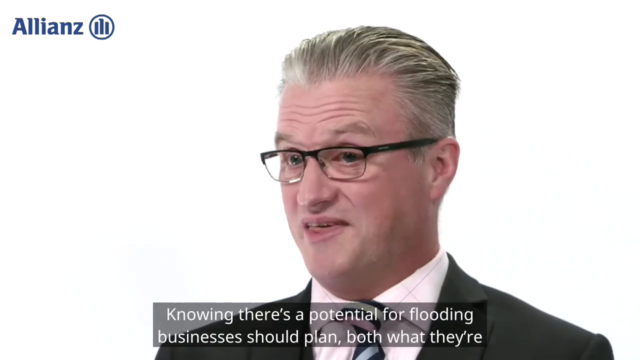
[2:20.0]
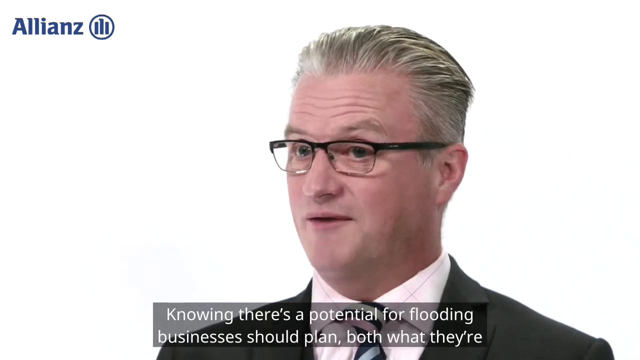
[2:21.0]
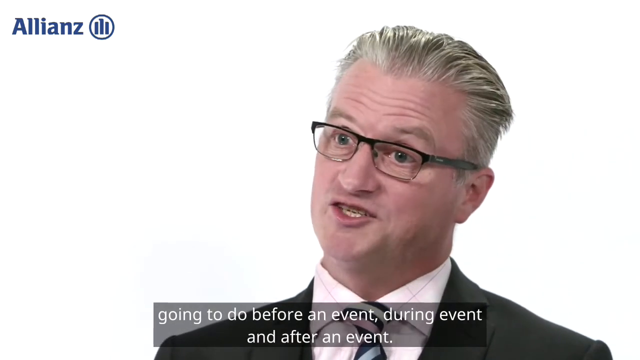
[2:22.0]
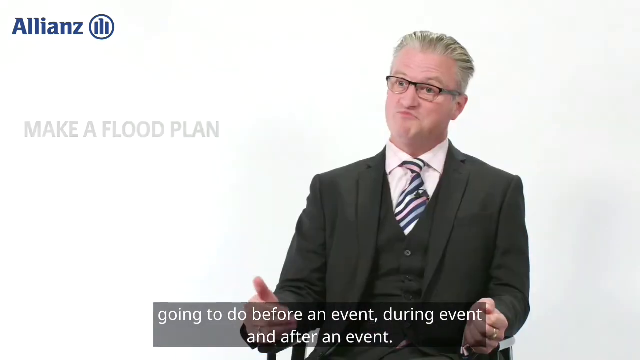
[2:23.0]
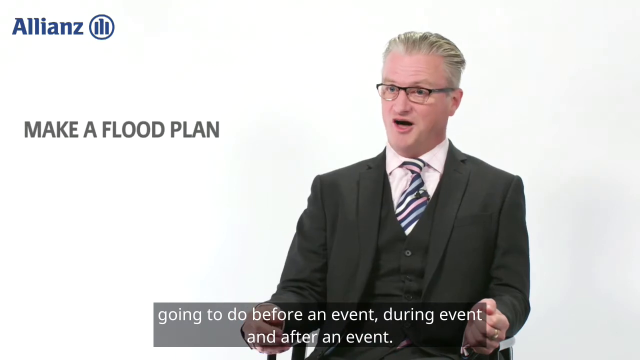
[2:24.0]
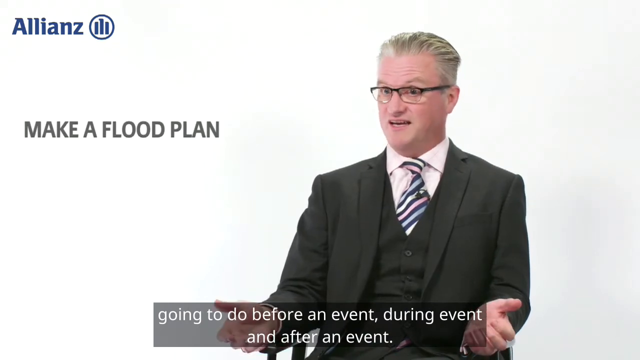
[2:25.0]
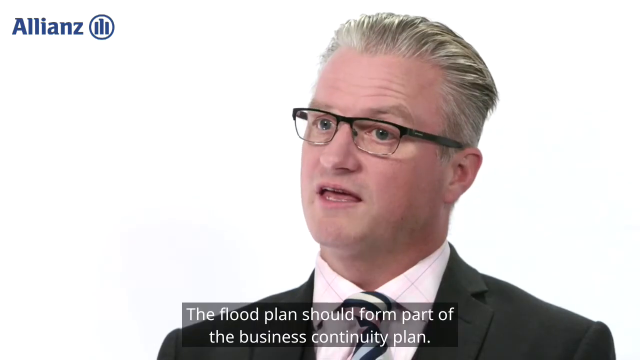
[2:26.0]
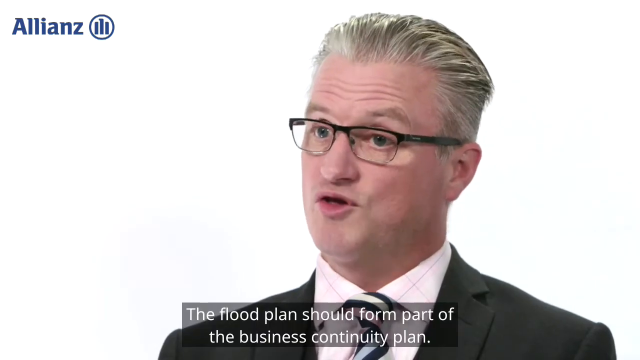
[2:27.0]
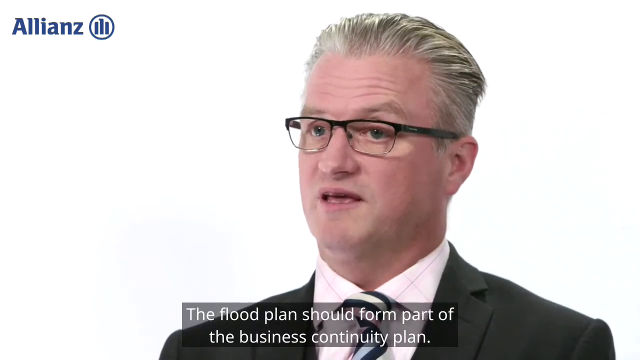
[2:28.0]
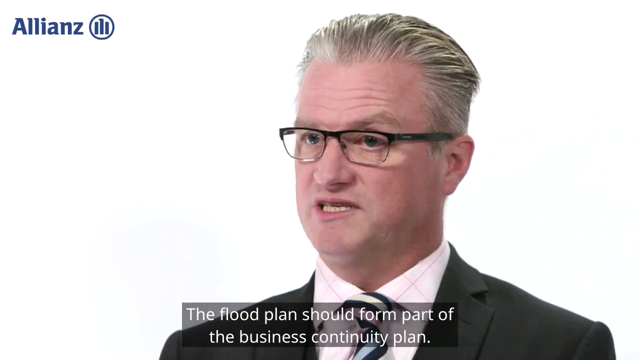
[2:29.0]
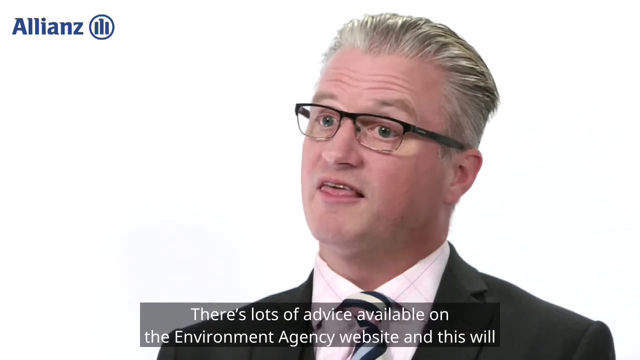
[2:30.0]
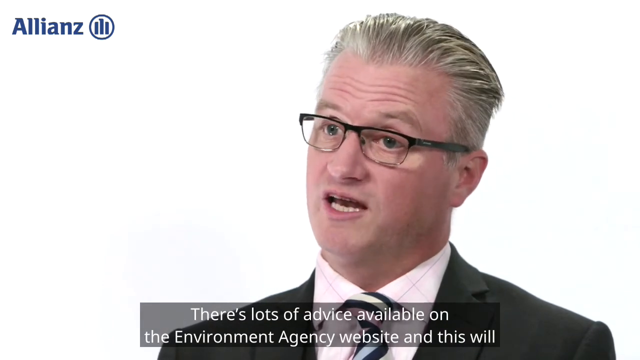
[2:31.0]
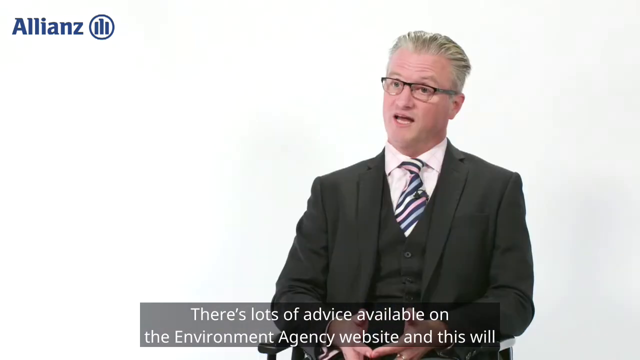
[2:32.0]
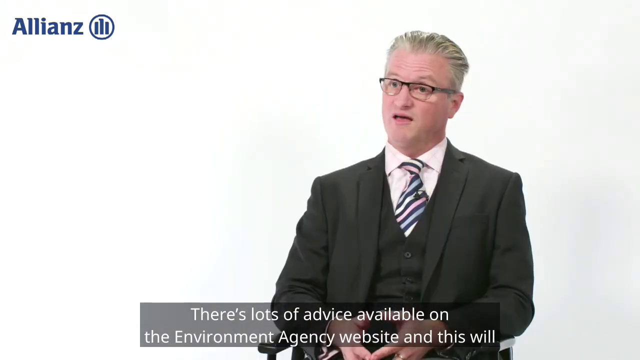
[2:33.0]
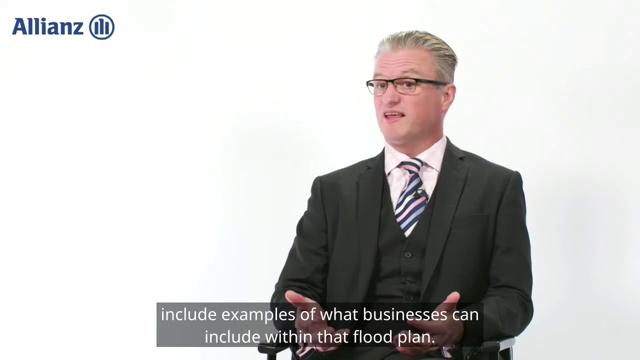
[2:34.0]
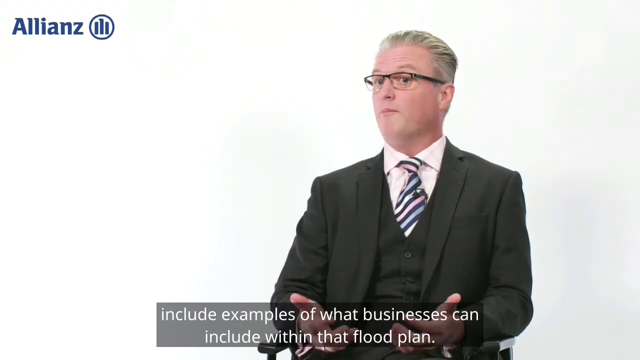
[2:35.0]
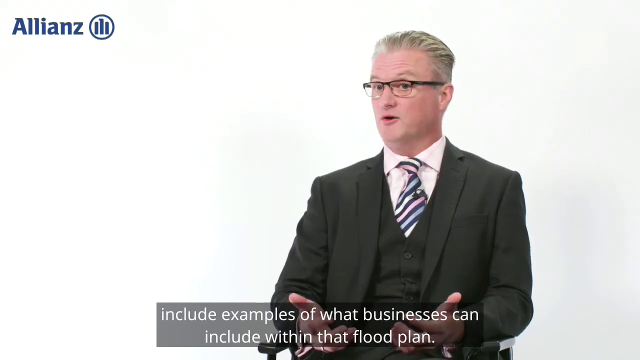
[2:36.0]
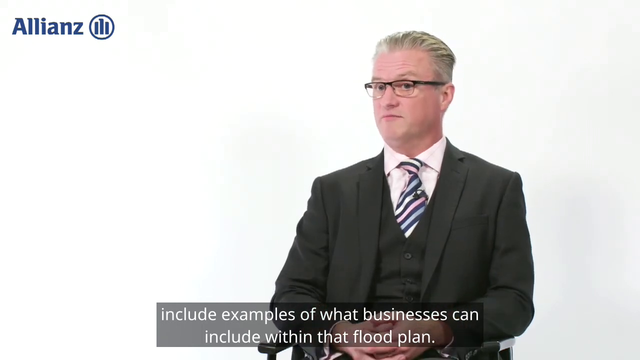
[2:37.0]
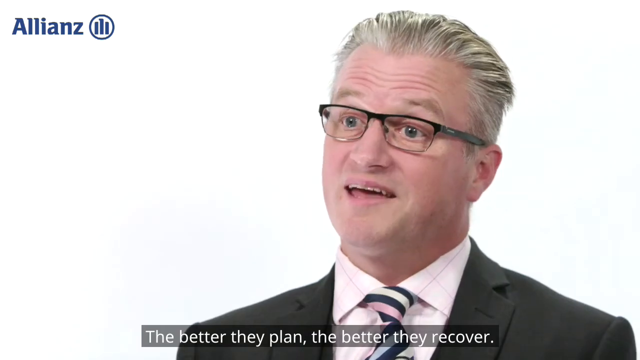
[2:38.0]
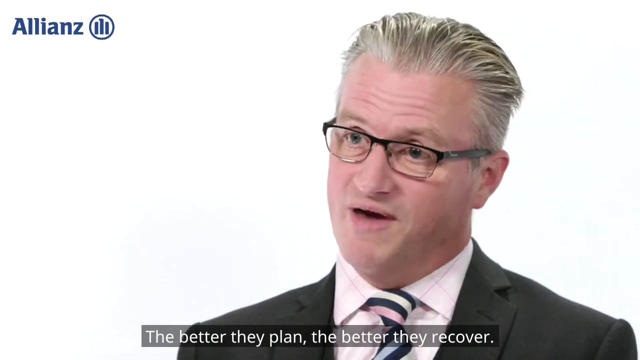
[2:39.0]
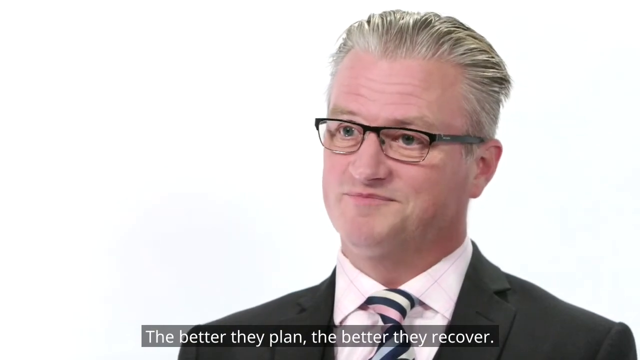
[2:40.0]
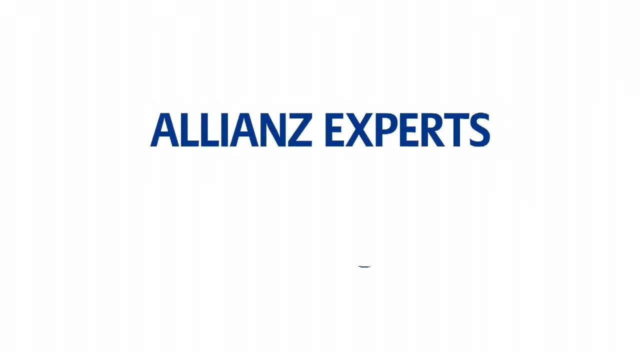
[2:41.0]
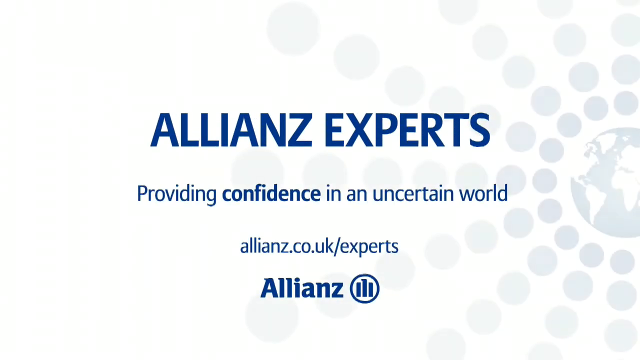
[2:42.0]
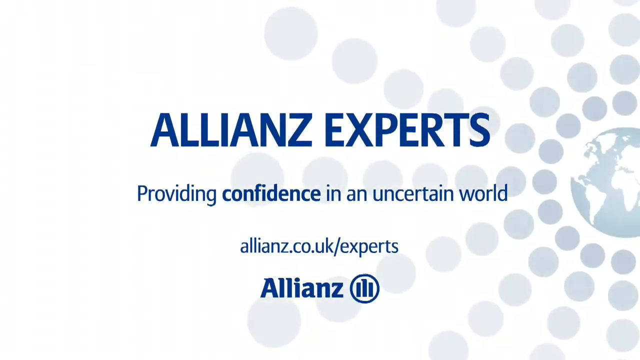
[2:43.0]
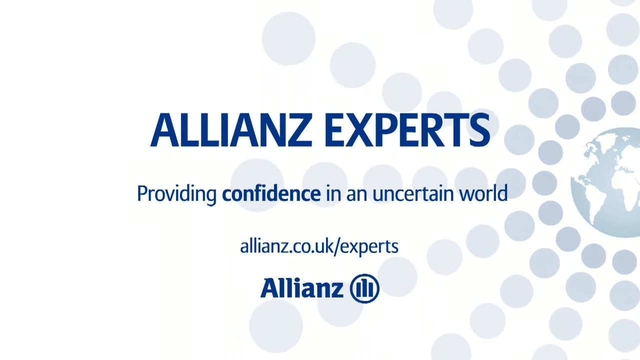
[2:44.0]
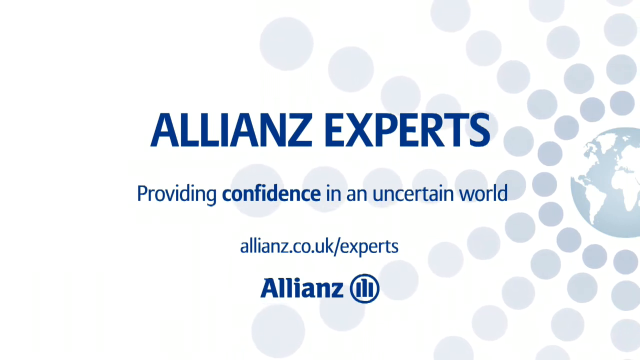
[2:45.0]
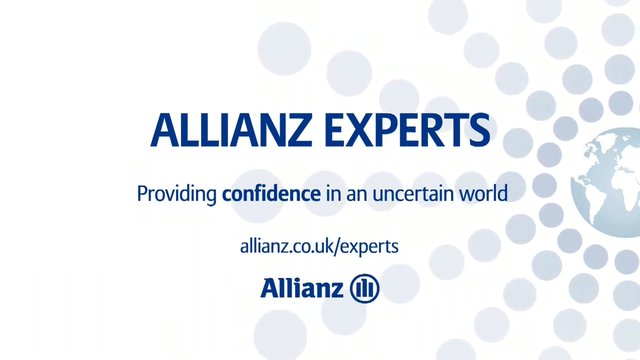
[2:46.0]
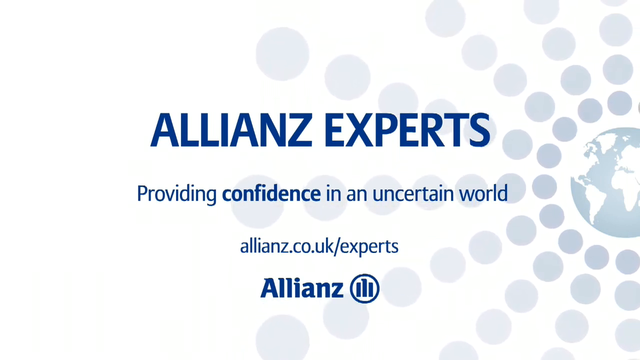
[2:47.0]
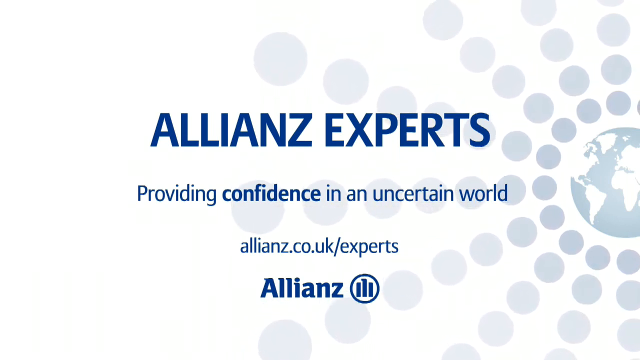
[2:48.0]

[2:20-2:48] The risk management expert is still shown talking. Text reads "there's lots of advice available on the Environment Agency website" and "The better they plan, the better they recover." The company's closing text reads "experts provide a confidence in an uncertain world," followed by the website "allianz.co.uk/experts." At the bottom is the company name, ALLIANZ.